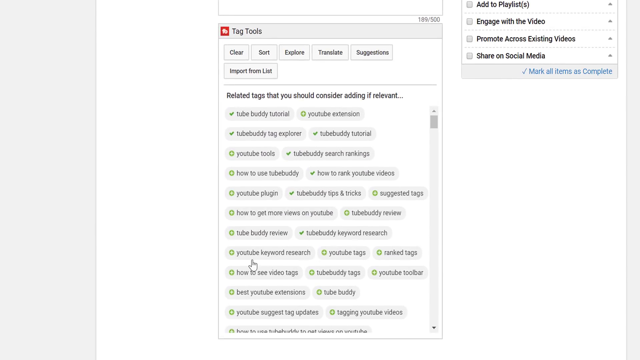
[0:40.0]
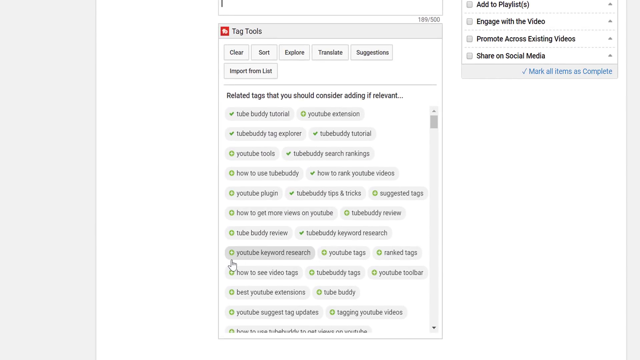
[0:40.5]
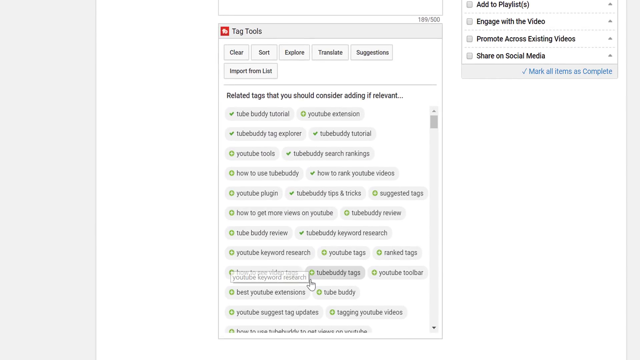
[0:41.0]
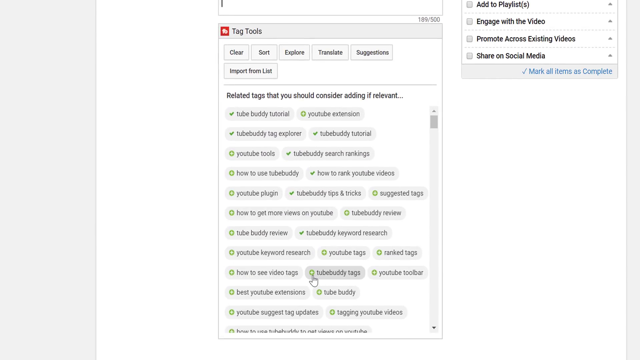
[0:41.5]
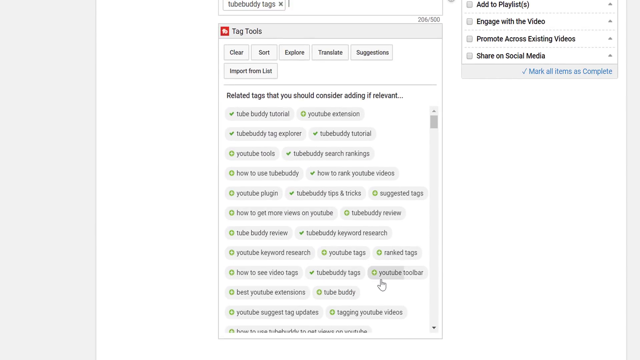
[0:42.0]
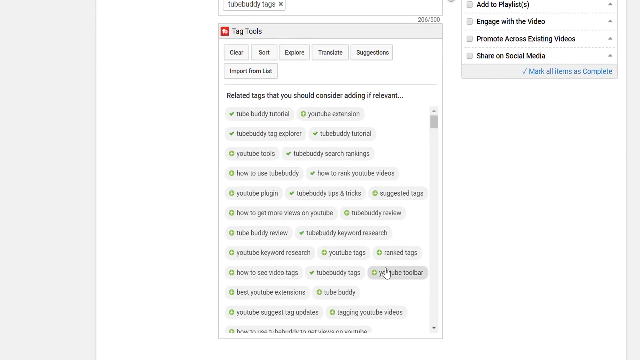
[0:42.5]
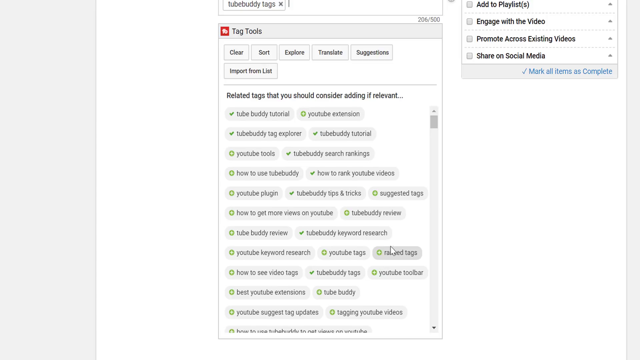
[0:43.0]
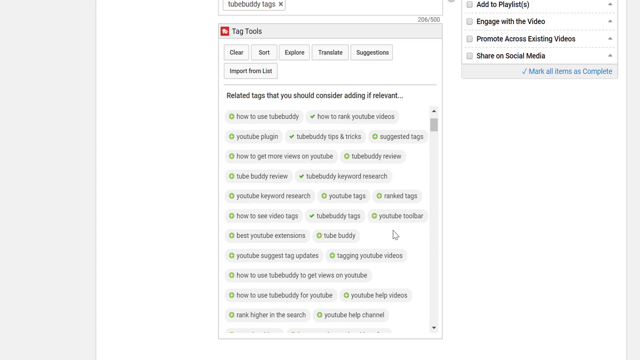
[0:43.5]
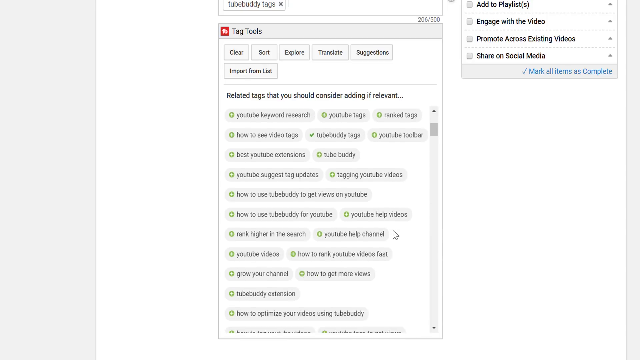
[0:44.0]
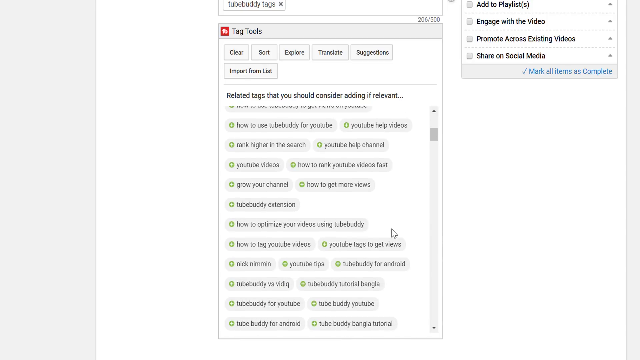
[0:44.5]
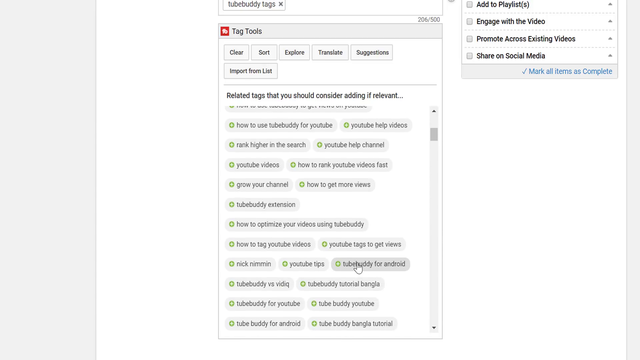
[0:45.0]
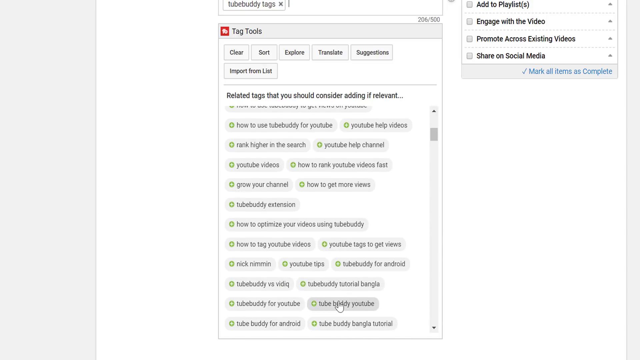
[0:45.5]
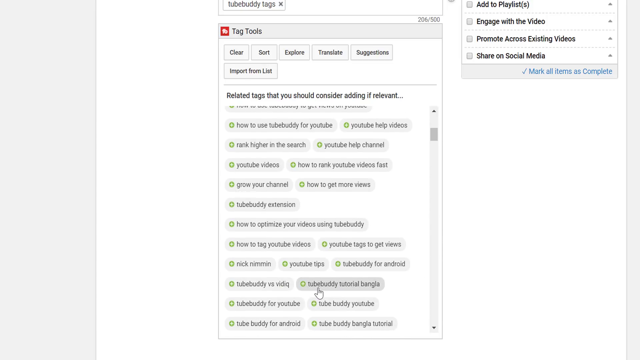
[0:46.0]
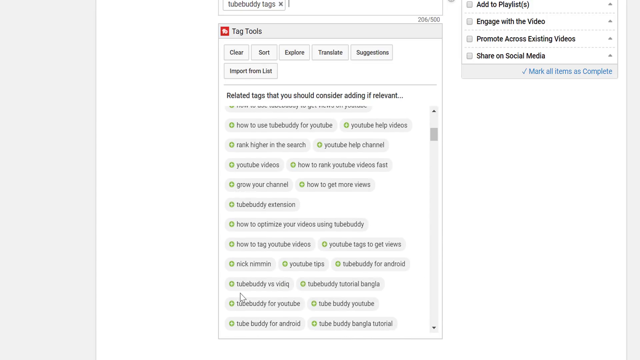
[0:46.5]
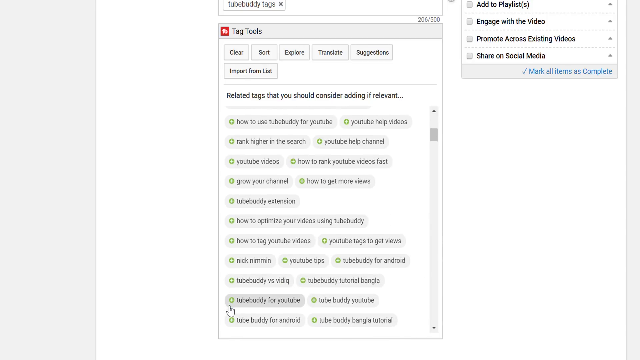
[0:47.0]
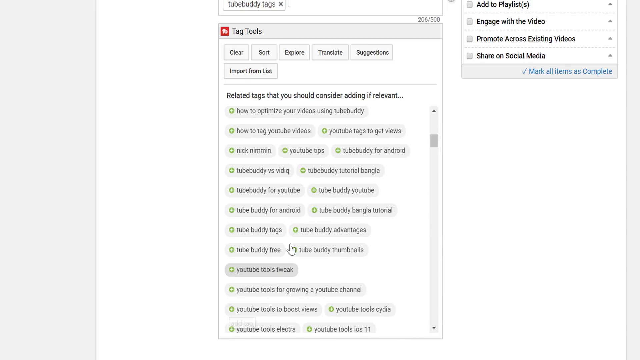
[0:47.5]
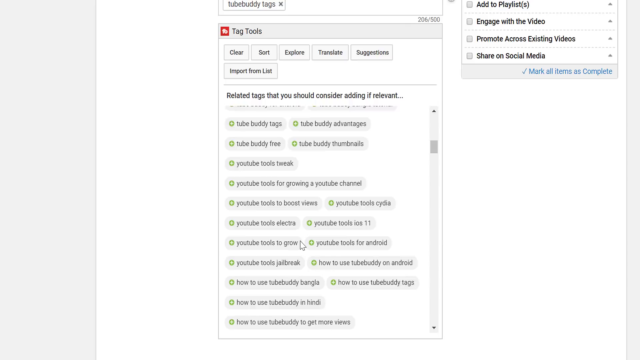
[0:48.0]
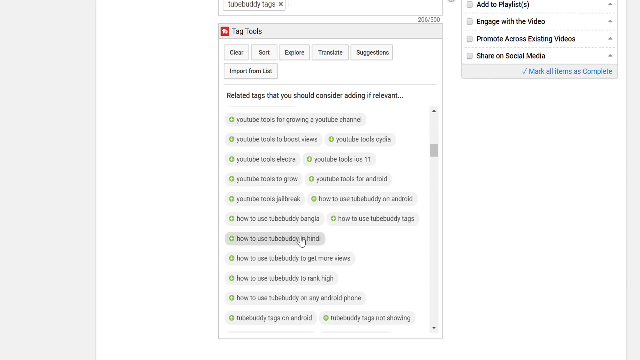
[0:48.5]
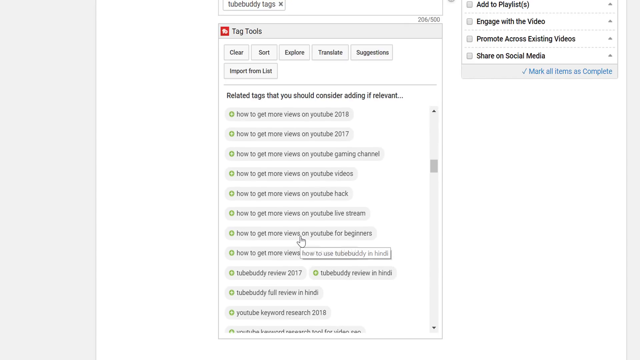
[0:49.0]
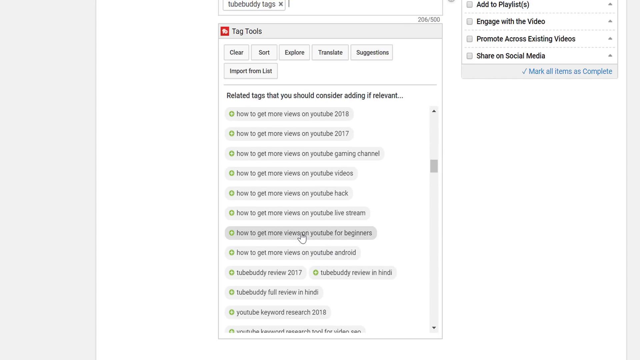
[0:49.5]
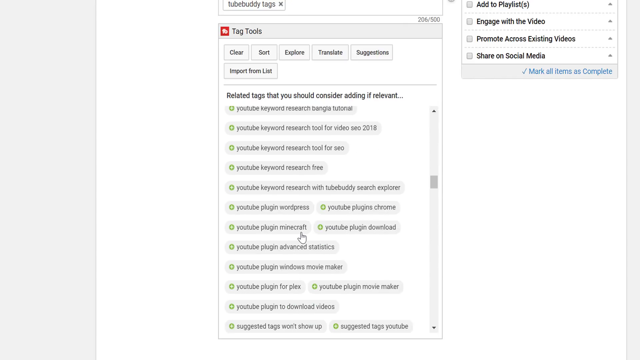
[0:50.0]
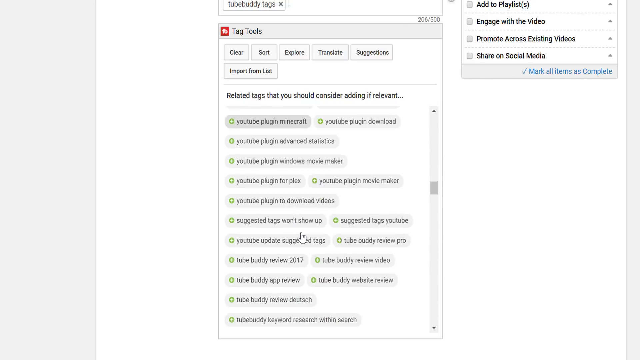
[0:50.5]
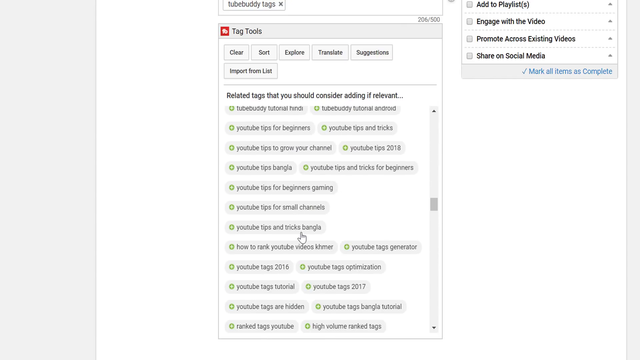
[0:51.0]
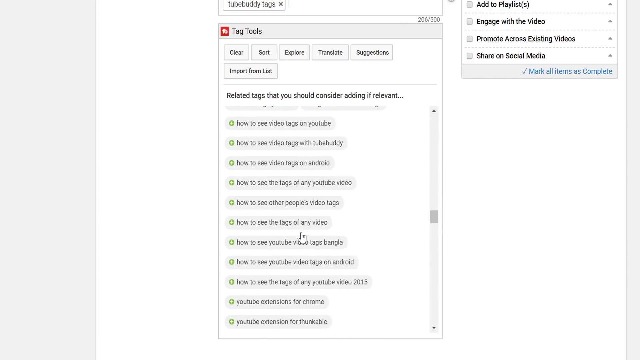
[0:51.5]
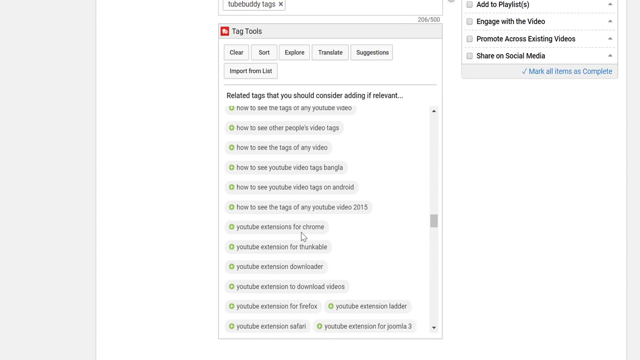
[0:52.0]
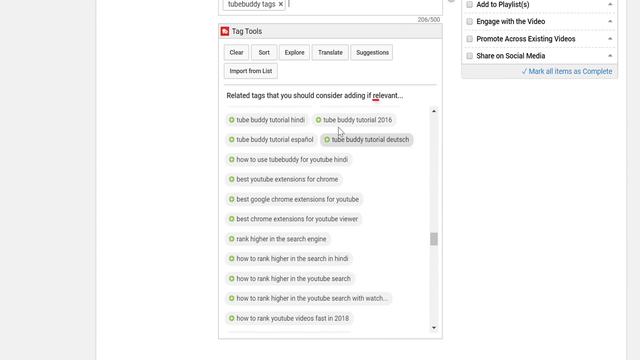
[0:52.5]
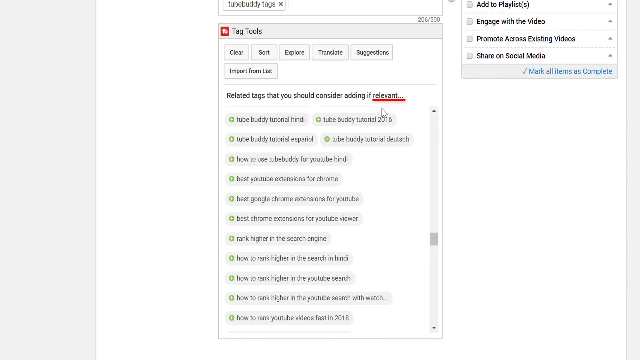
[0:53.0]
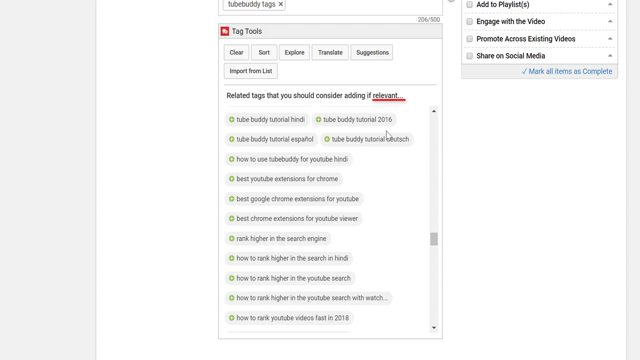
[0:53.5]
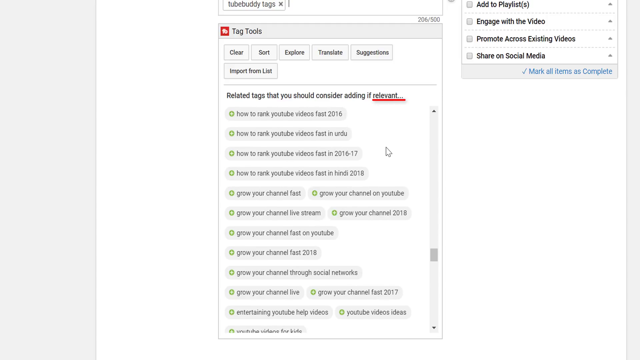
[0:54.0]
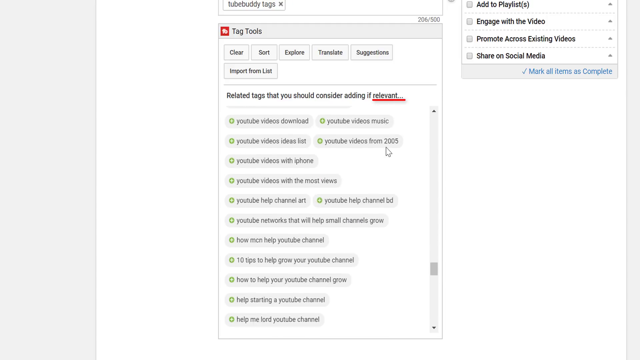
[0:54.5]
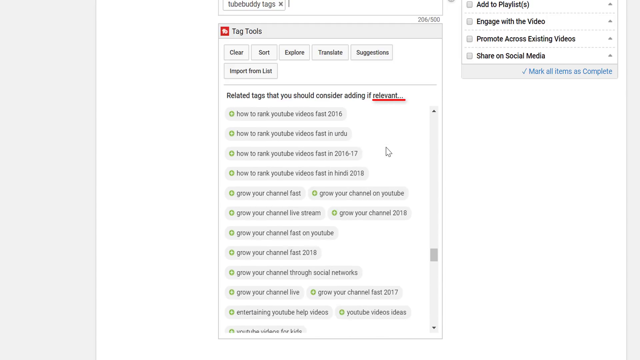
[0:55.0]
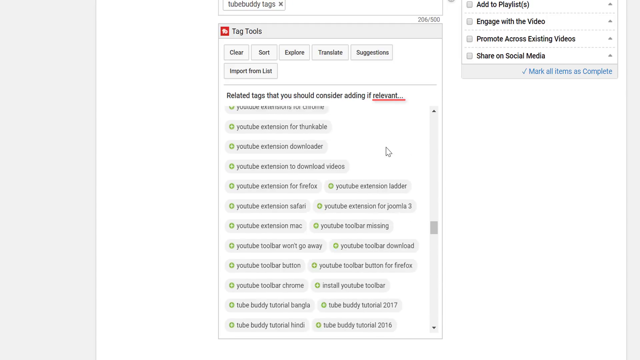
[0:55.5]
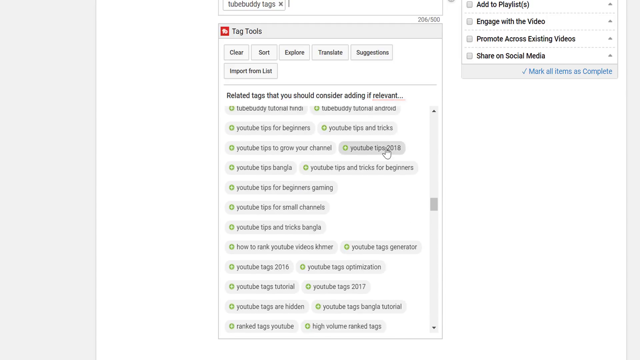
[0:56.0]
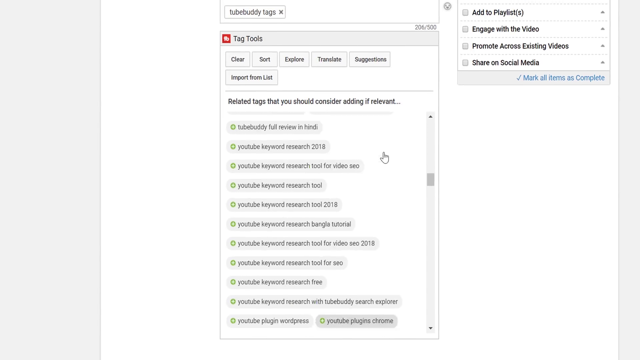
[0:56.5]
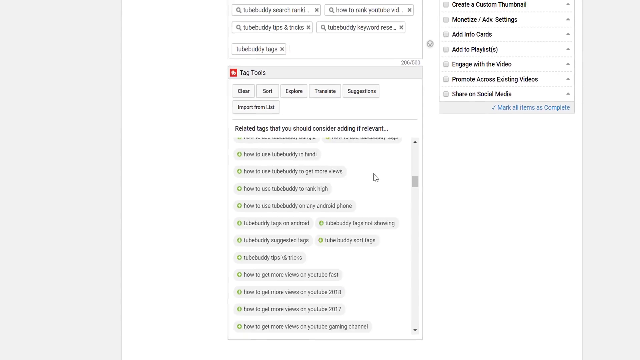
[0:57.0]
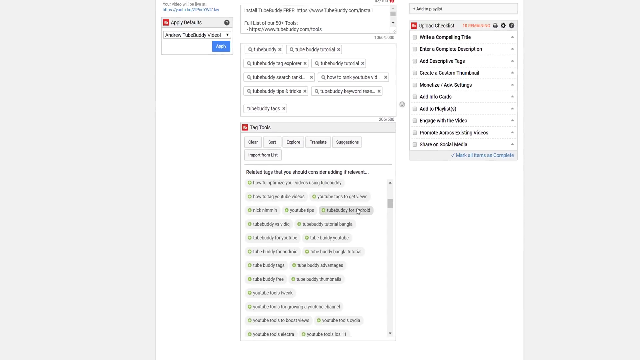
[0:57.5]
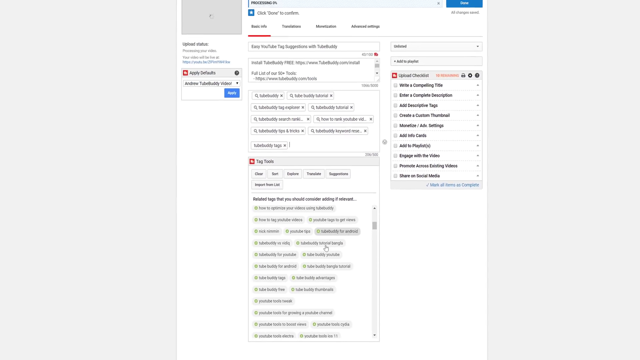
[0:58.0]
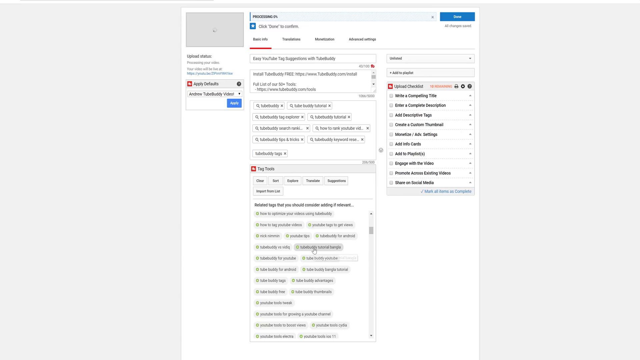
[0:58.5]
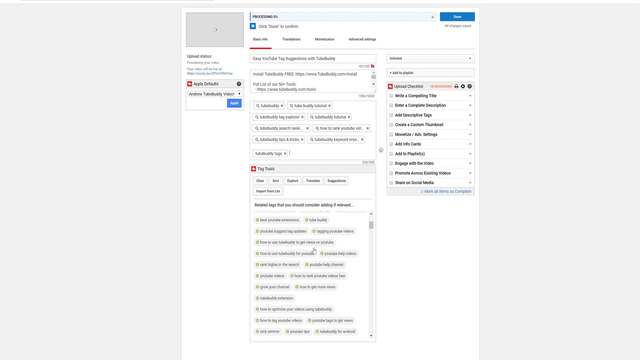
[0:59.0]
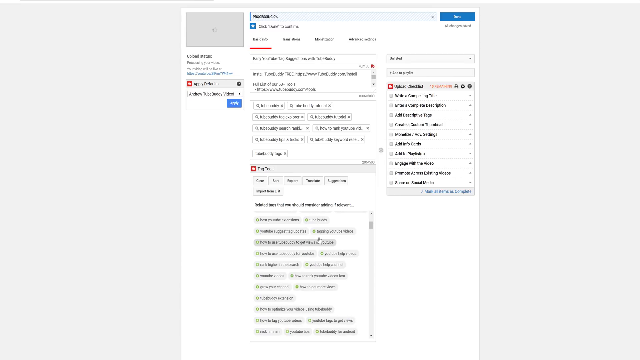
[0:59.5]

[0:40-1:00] The tag tools screen is shown. The cursor moves over various tags, and each tag changes from light gray to a darker gray when highlighted. The man scrolls down the tag screen; the scroll bar moves down and the tags move up, revealing more of them. He continues hovering over different tags, which turn darker gray, and scrolls again, highlighting more tags that change from a light gray to a dark gray background when hovered. He keeps highlighting tags and scrolling down. He has marked up his video with a red underline beneath the word "relevant". The view then scrolls all the way up and pans all the way up to show the full screen.